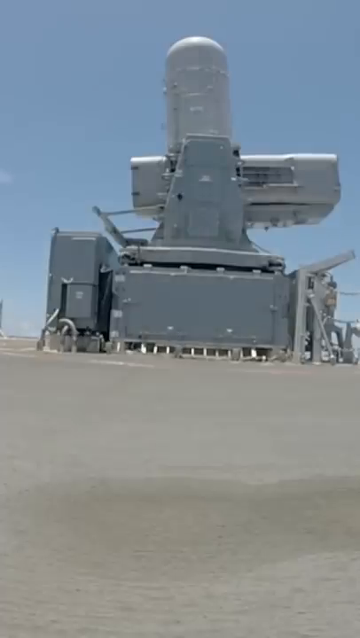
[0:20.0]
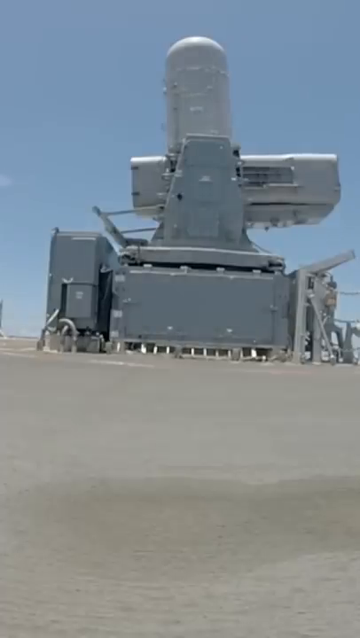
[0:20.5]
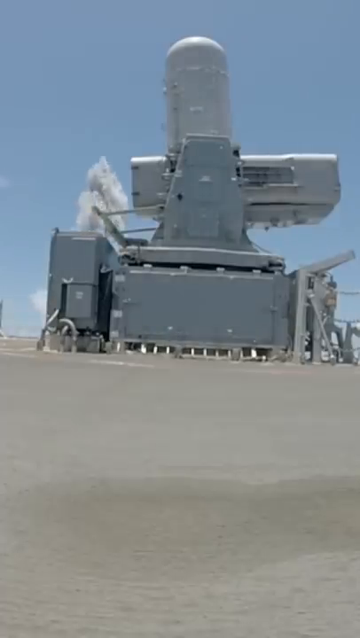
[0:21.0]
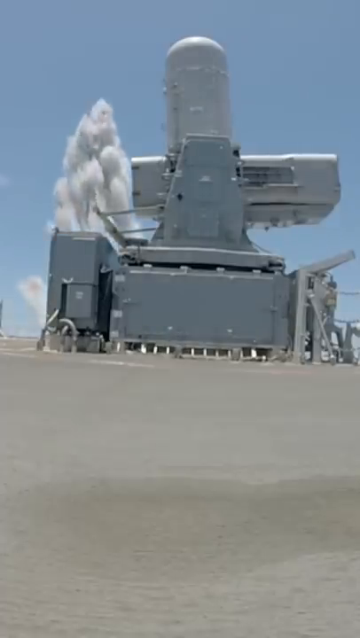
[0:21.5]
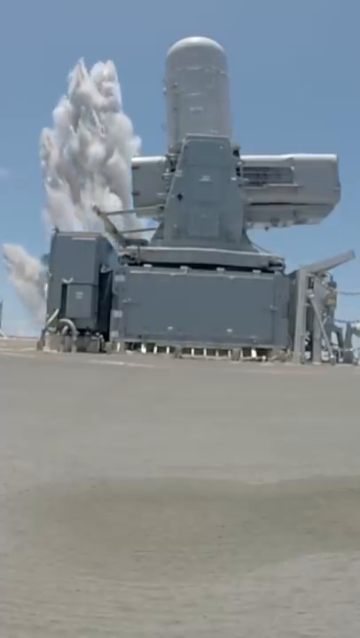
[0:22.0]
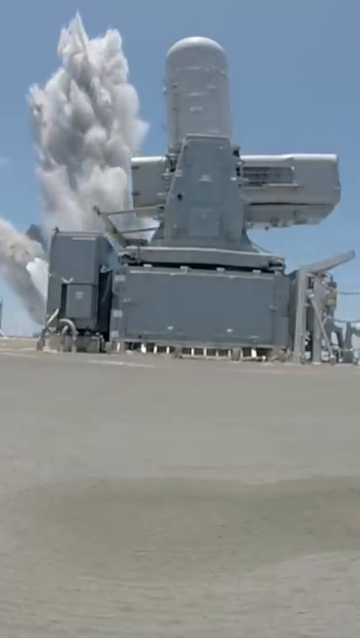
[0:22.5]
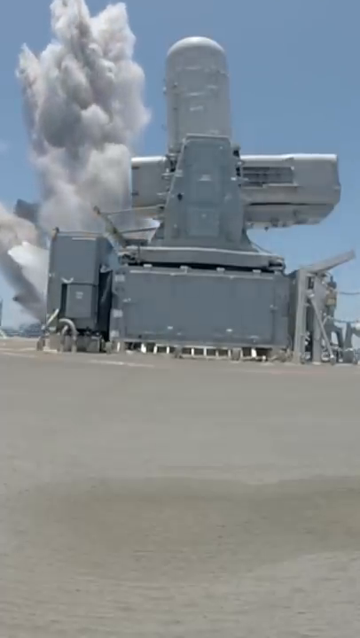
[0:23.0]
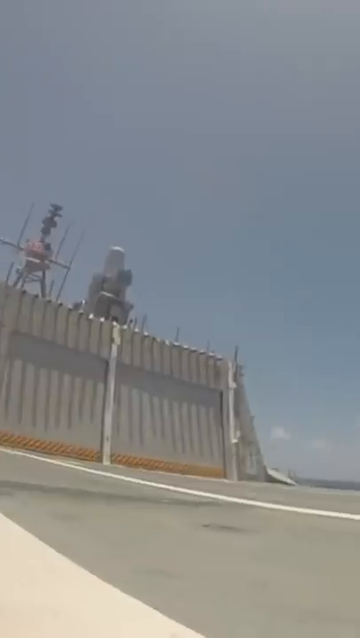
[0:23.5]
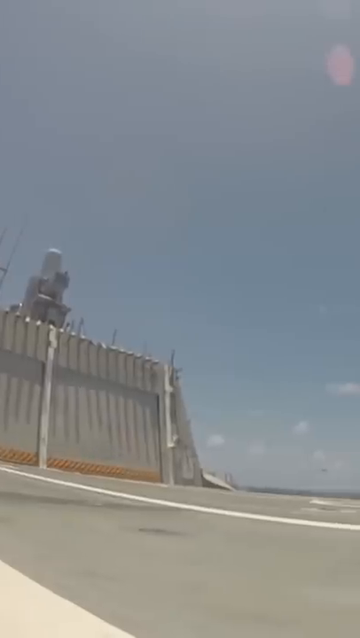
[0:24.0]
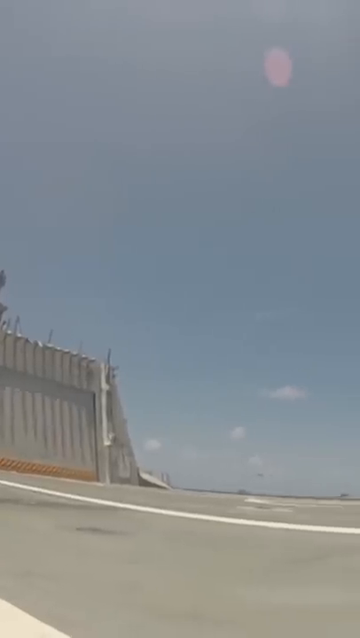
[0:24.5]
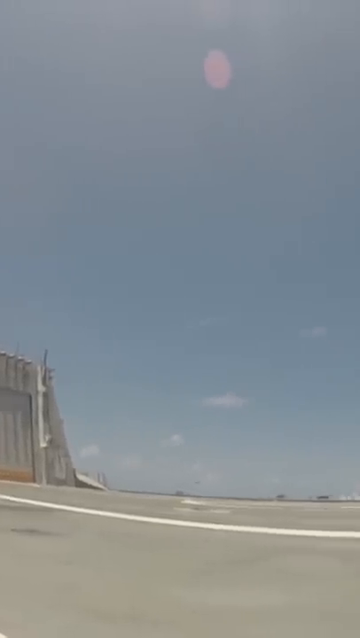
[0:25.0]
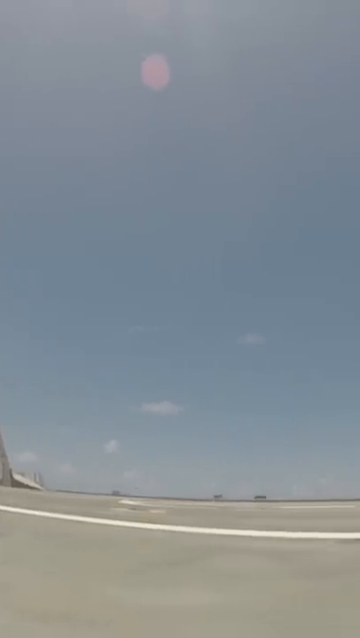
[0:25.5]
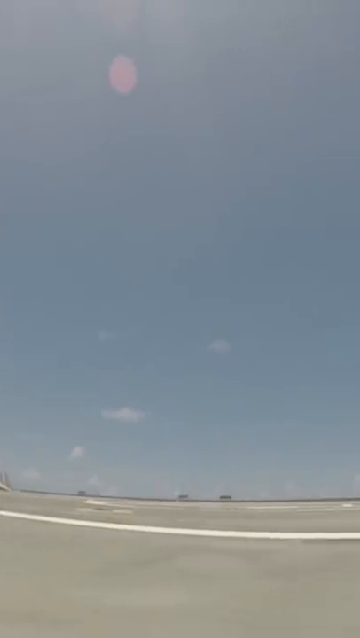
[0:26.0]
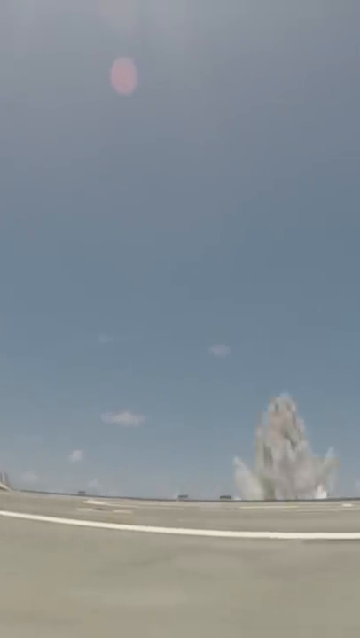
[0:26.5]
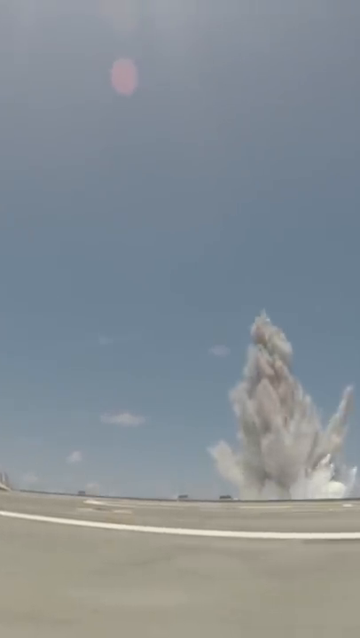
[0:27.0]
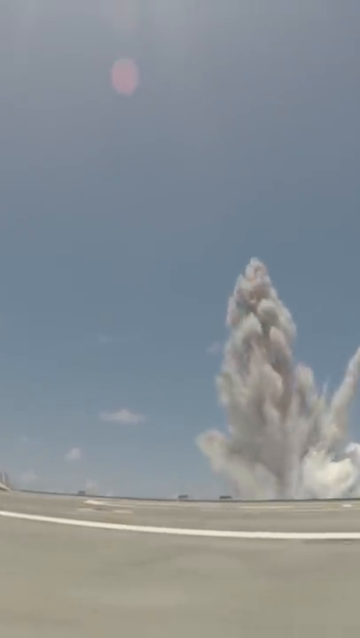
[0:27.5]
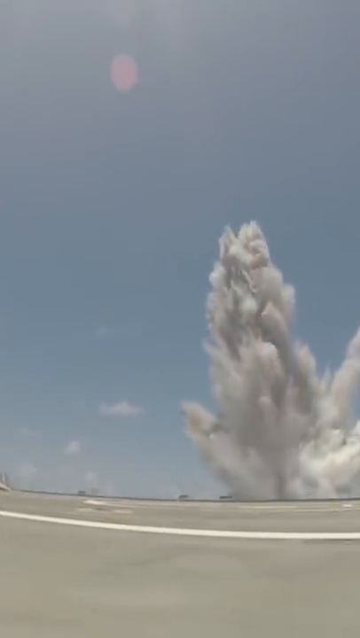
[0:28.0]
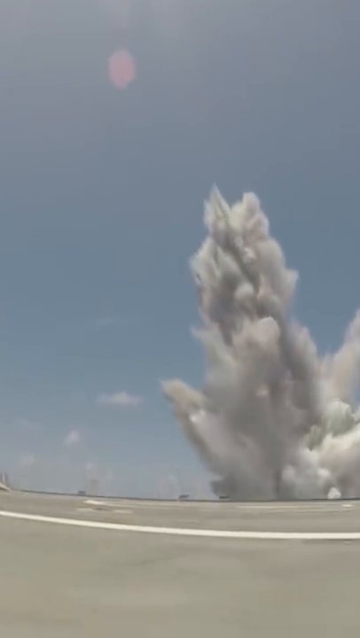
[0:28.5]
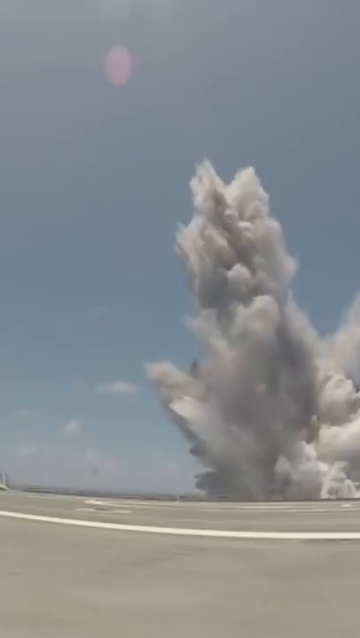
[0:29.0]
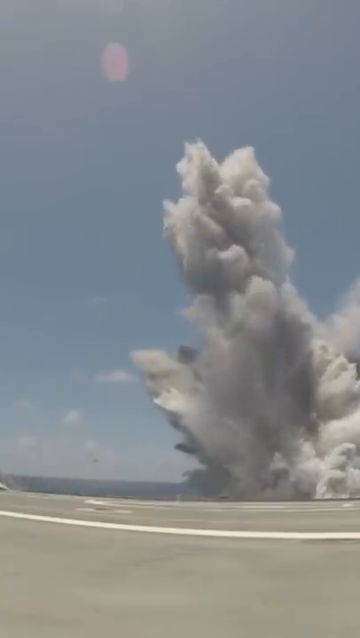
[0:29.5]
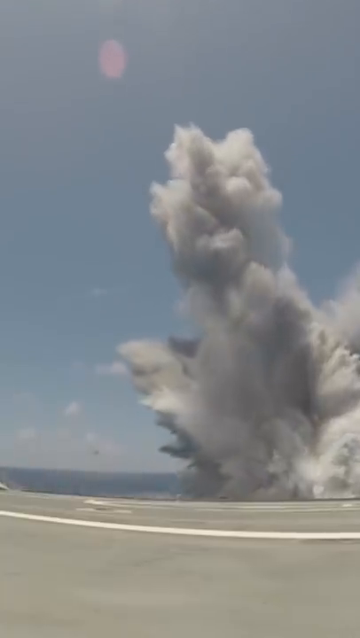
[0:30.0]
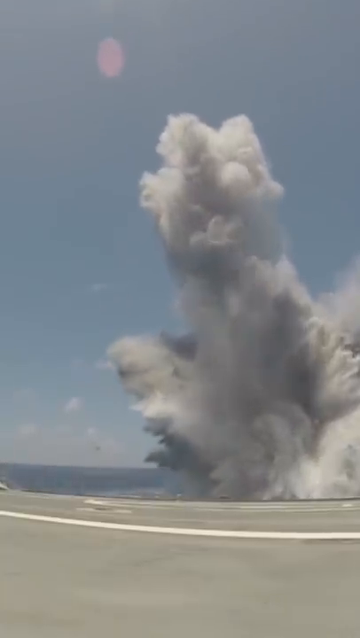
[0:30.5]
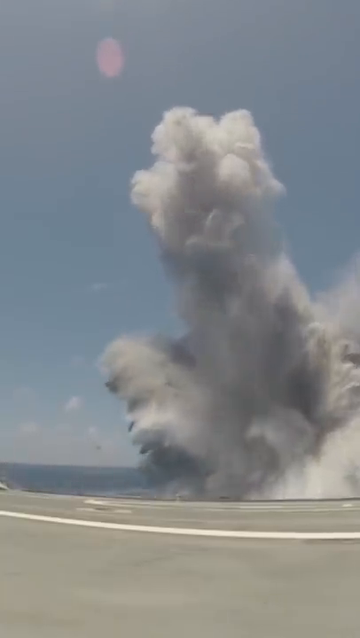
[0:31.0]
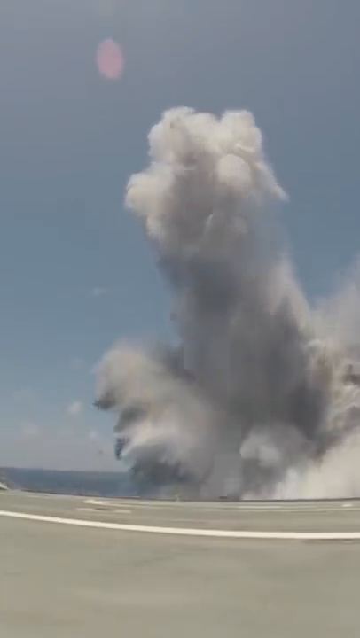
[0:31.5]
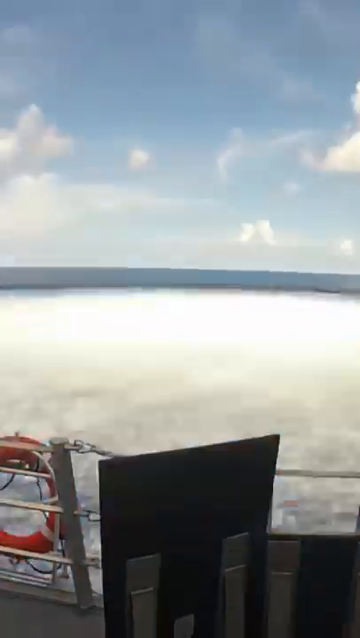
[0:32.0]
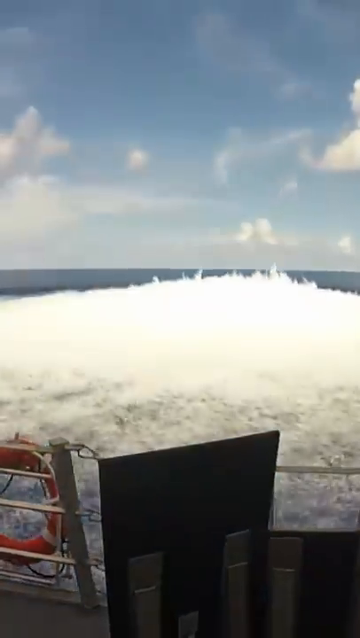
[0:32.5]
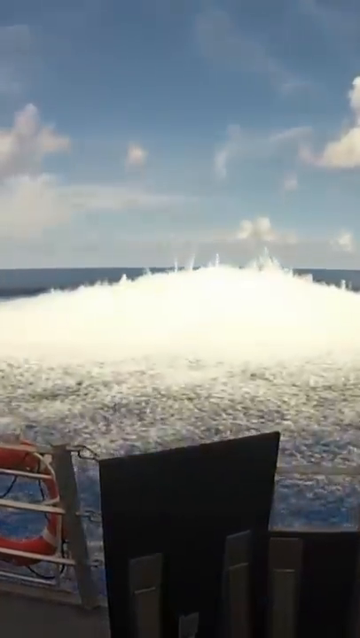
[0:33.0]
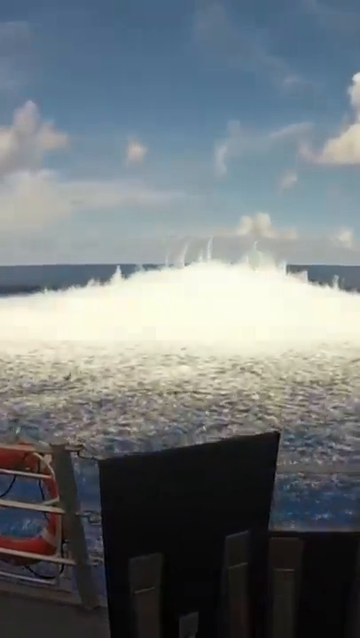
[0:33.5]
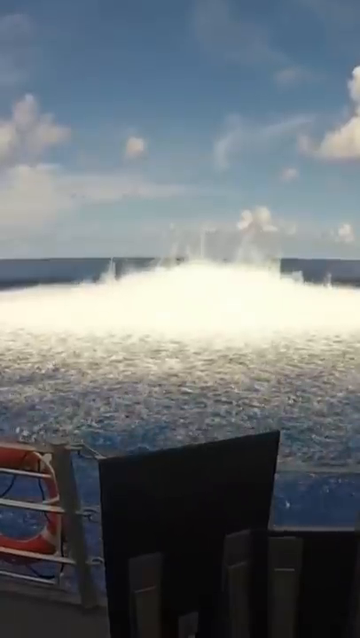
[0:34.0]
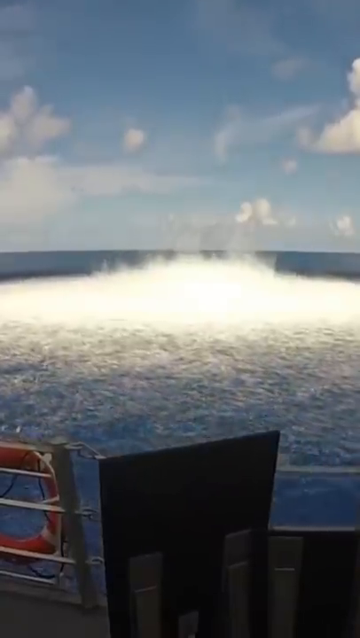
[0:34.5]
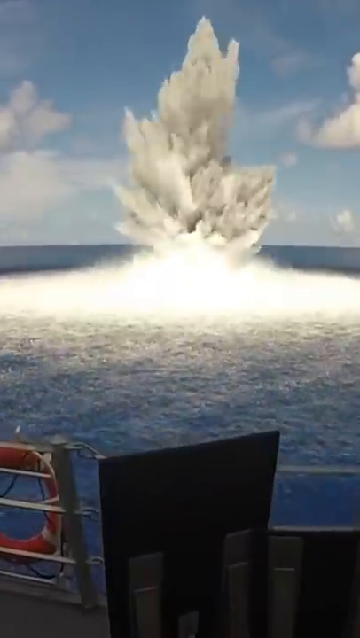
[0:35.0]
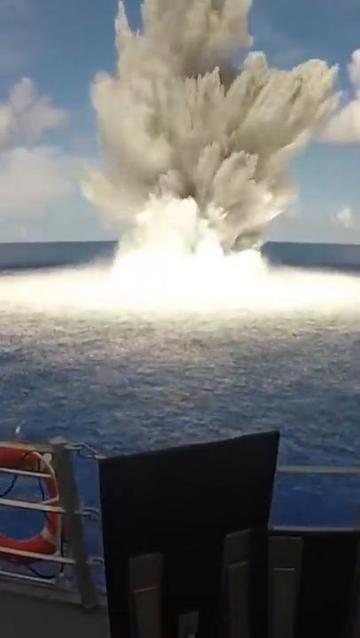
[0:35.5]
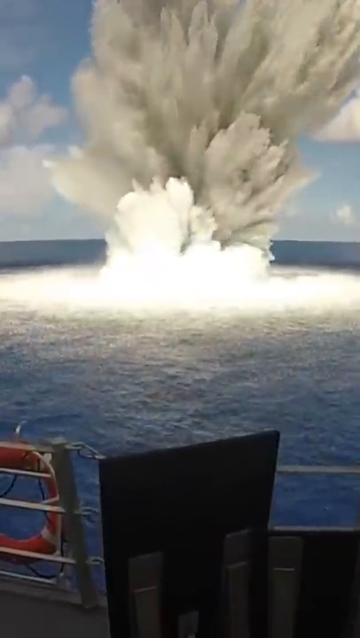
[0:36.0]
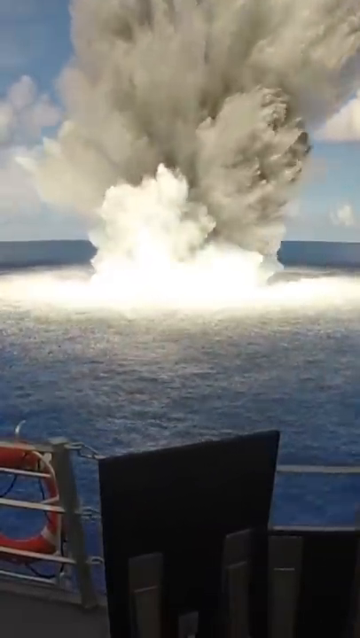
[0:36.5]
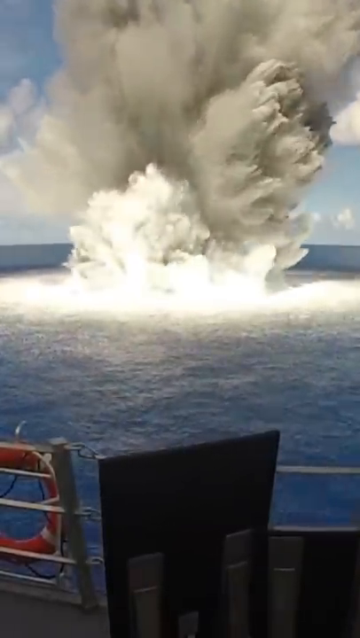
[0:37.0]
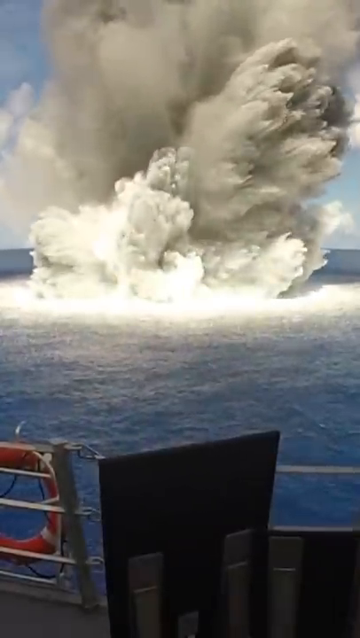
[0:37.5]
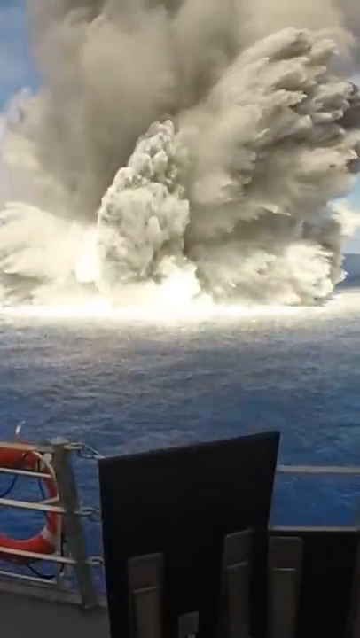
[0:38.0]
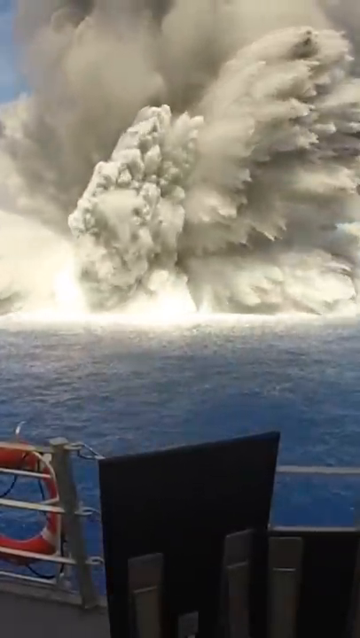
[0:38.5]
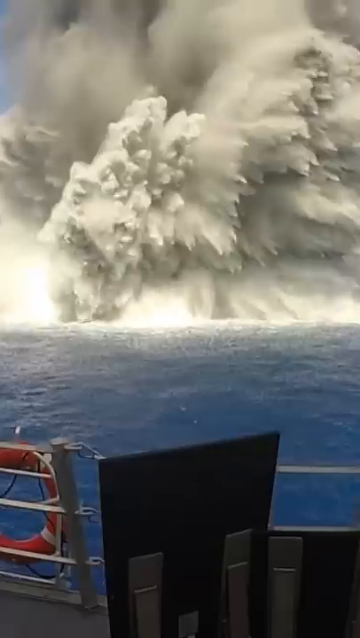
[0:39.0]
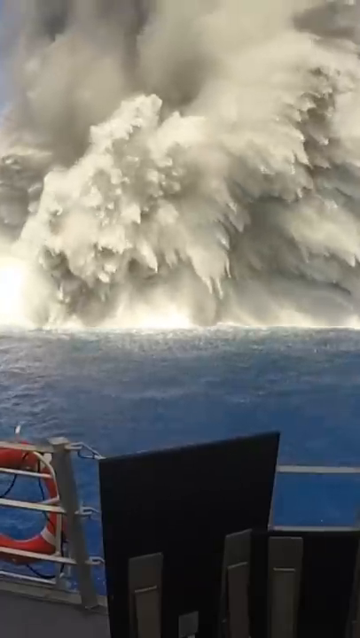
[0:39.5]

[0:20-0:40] The camera aboard the top platform of the ship films the explosion, which appears to be off the bow. Then a different shot, with the camera angled to the side of the ship, shows the underwater explosion sending water into the sky. From this viewpoint on the ship, the ship's side rises and lowers with the waves created by the explosion. The next side view from the ship, almost directly even with the explosion, is the most intense, close view of the underwater explosion: first white boiling bubbles appear on the surface of the water in a wide circle upon detonation, and a couple of seconds later the explosion comes up out of the water, sending plumes of ocean water into the air.